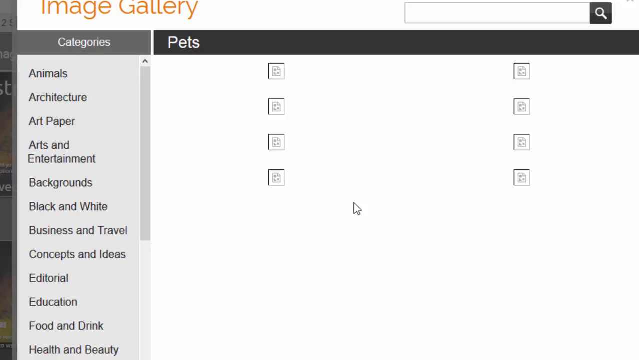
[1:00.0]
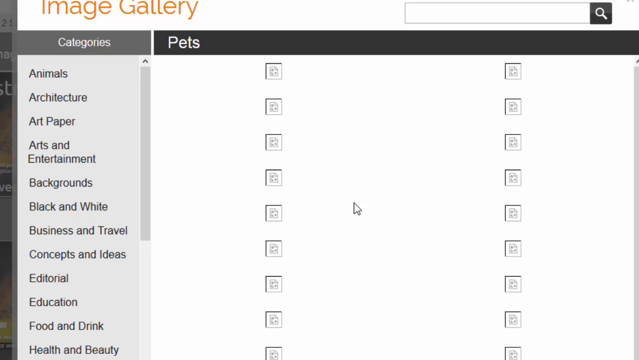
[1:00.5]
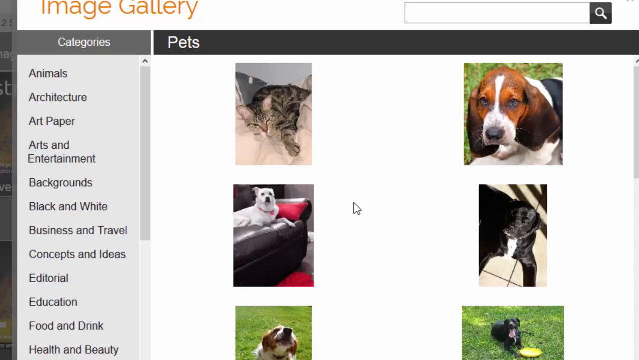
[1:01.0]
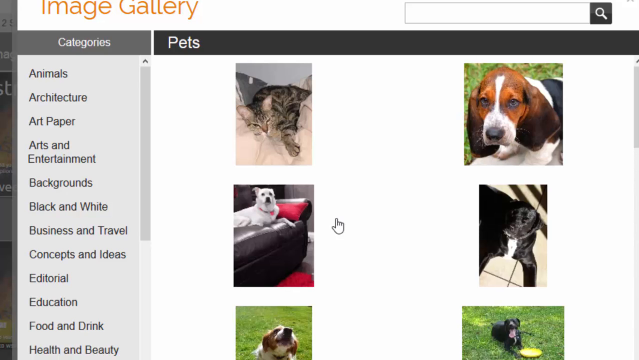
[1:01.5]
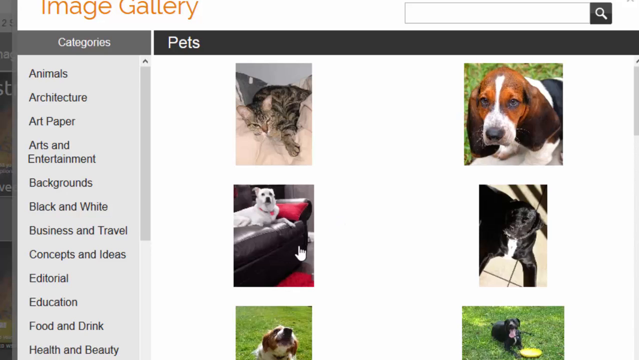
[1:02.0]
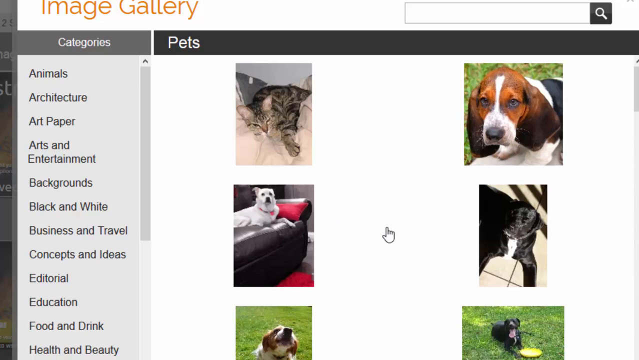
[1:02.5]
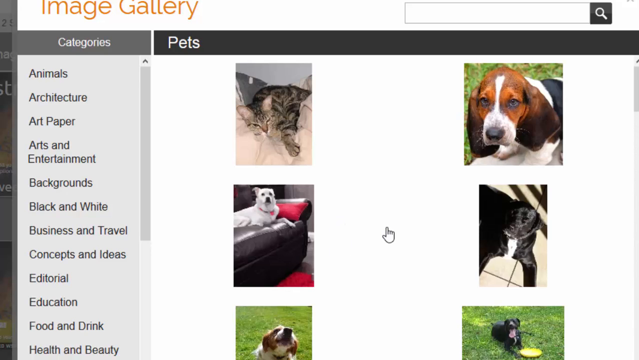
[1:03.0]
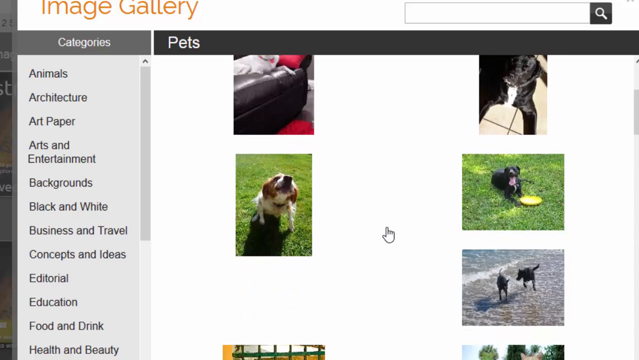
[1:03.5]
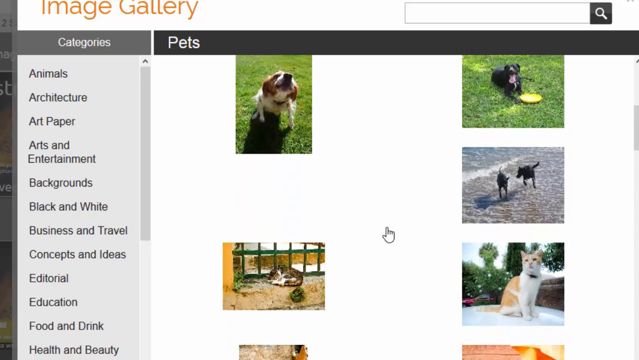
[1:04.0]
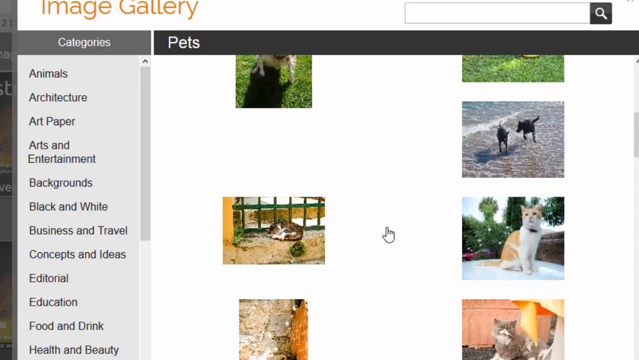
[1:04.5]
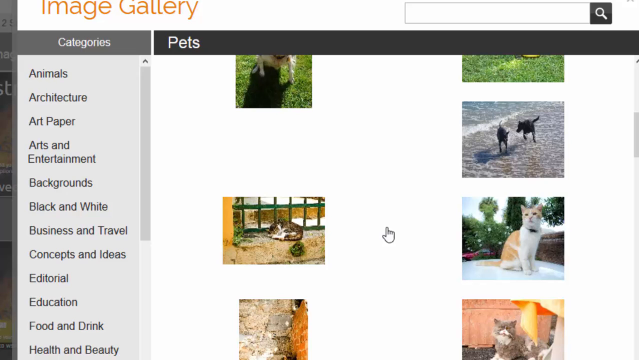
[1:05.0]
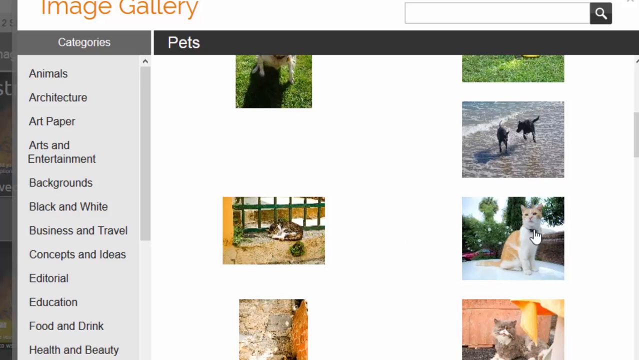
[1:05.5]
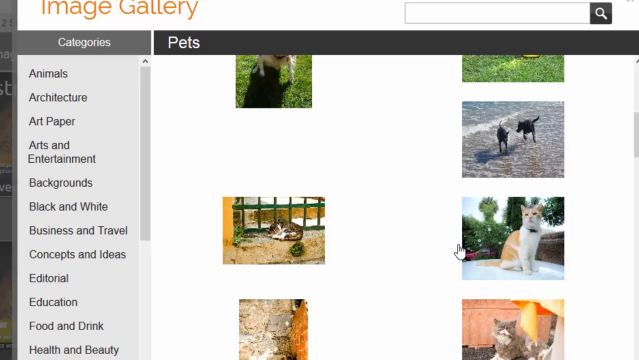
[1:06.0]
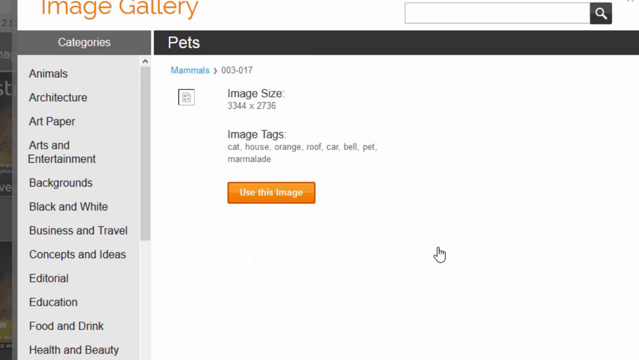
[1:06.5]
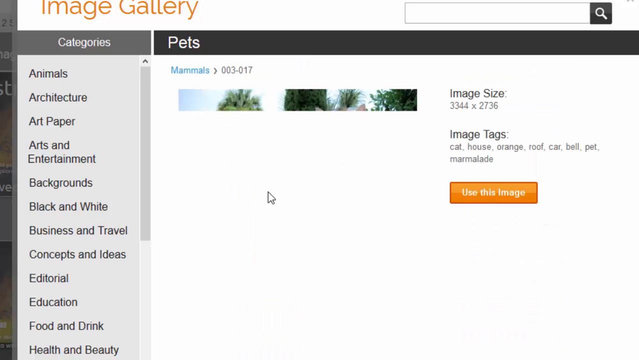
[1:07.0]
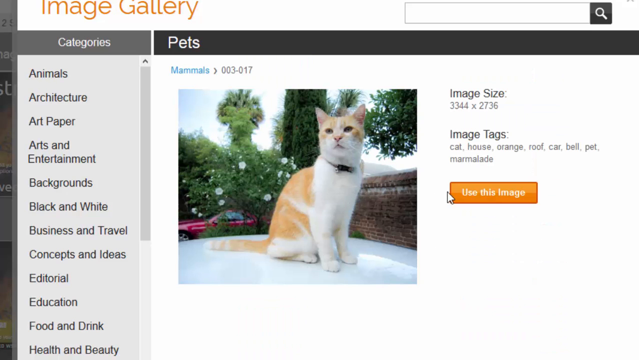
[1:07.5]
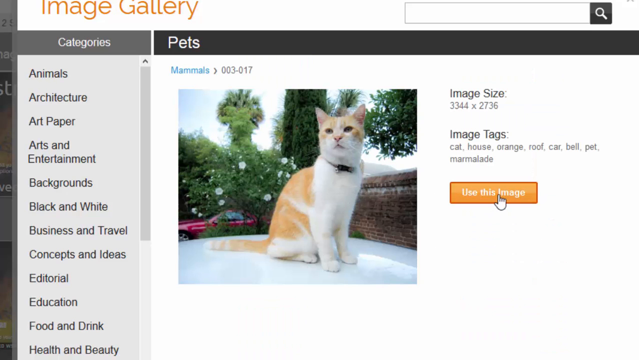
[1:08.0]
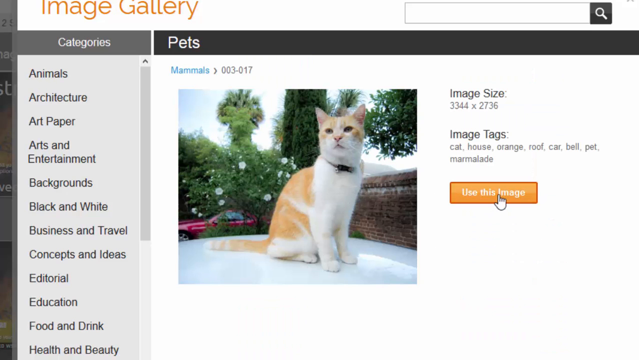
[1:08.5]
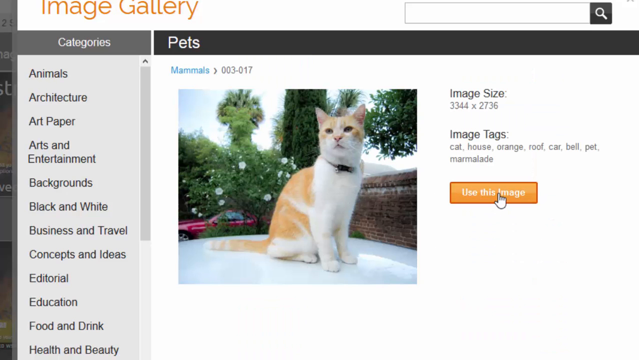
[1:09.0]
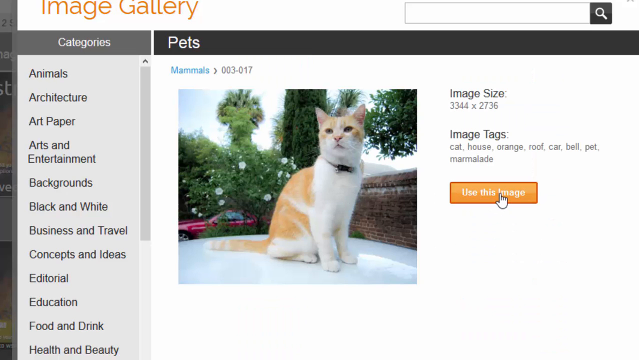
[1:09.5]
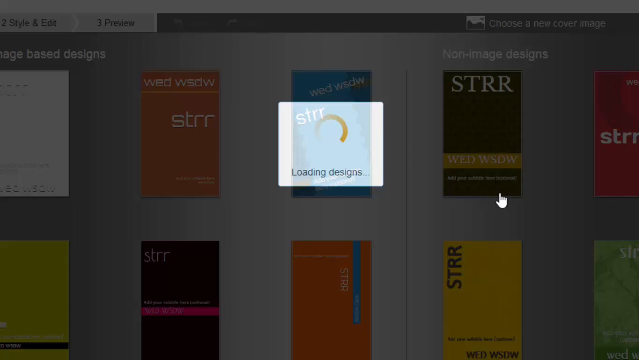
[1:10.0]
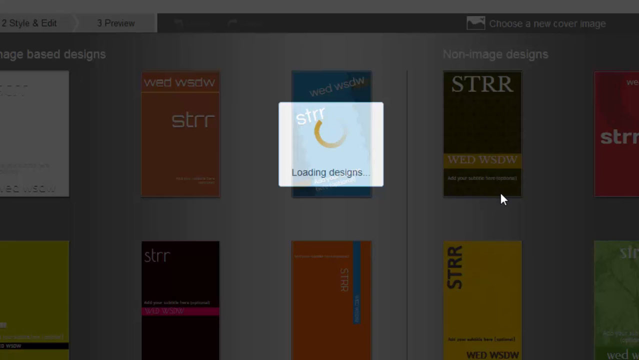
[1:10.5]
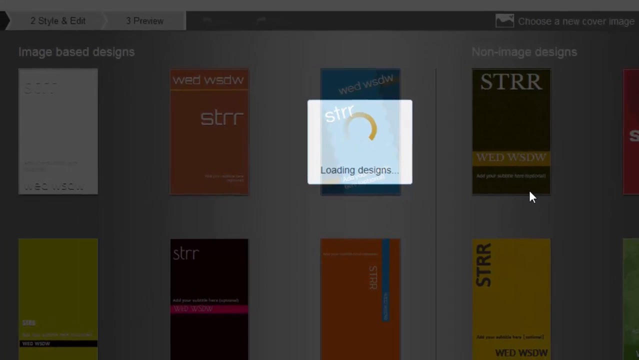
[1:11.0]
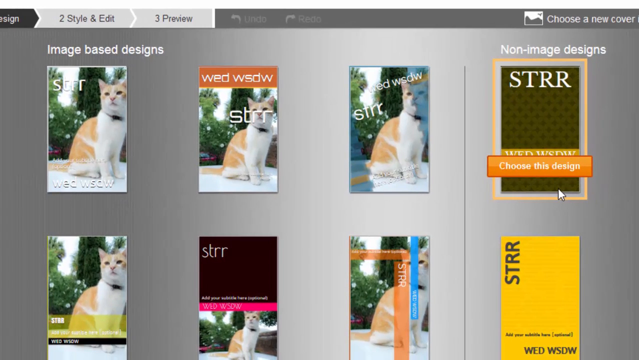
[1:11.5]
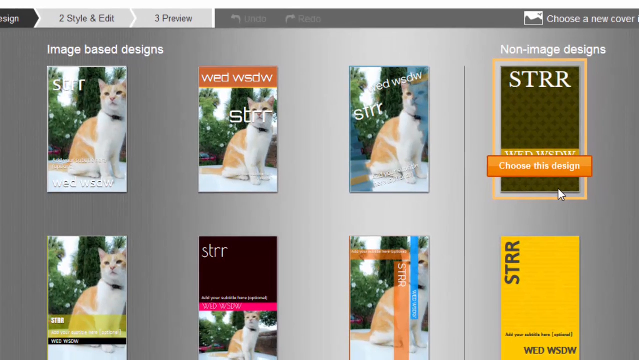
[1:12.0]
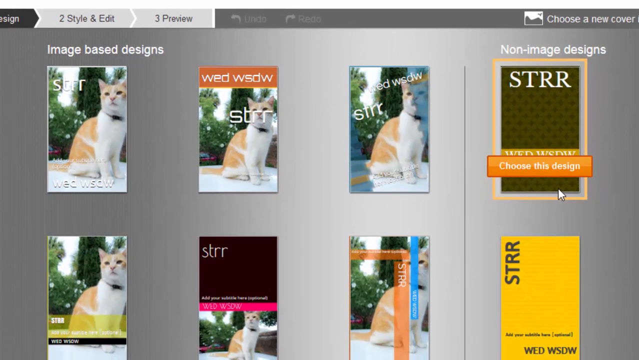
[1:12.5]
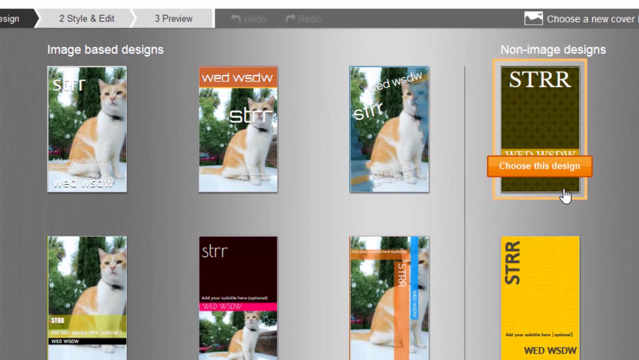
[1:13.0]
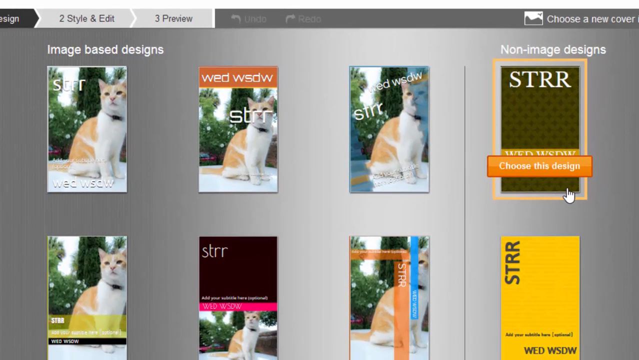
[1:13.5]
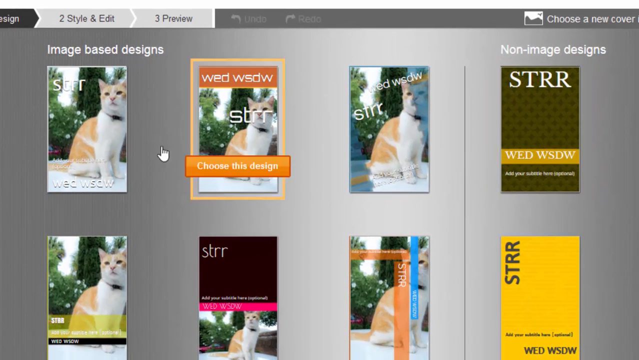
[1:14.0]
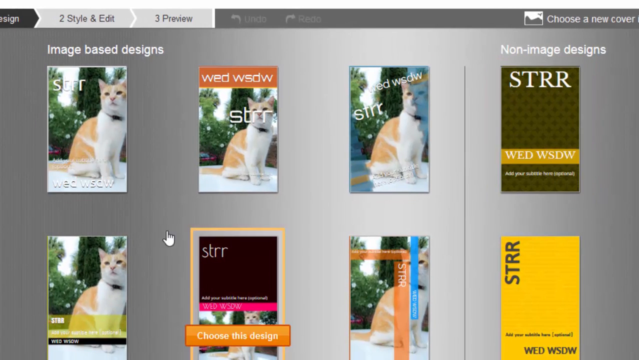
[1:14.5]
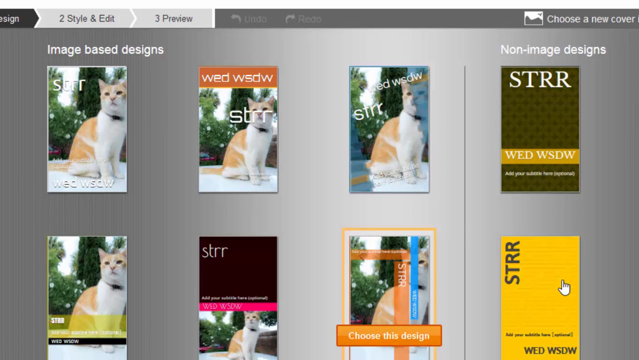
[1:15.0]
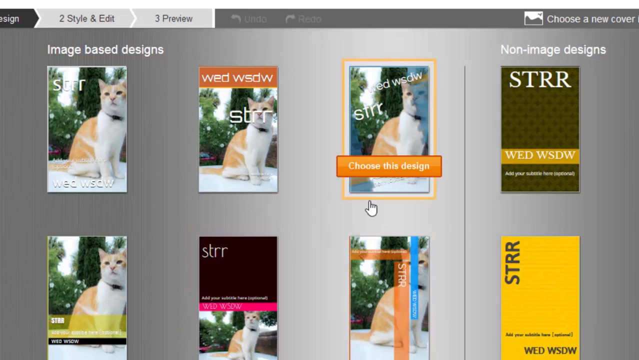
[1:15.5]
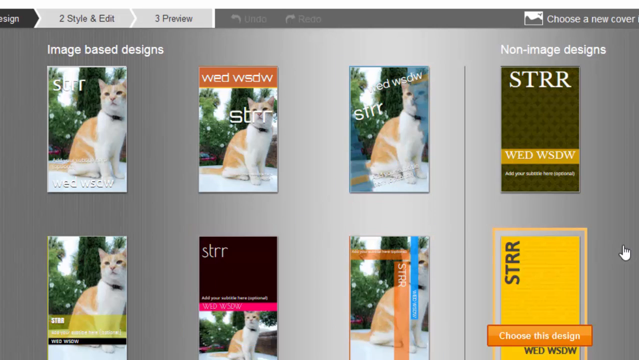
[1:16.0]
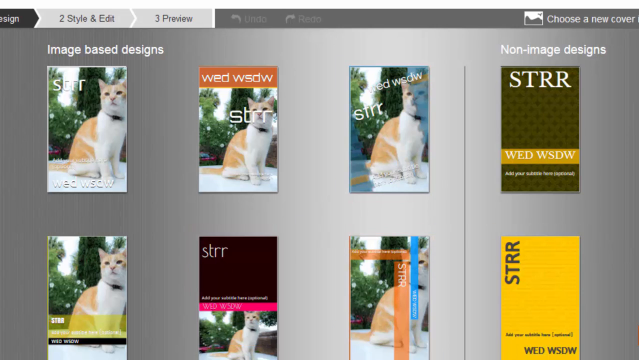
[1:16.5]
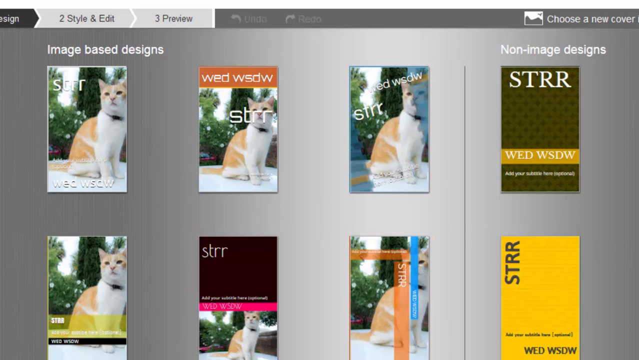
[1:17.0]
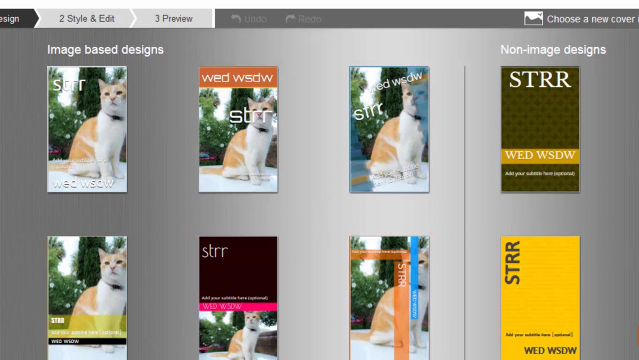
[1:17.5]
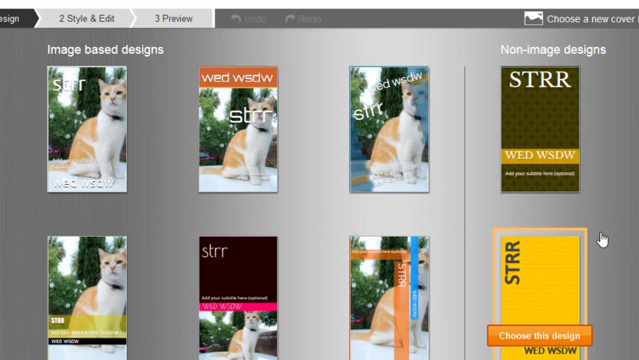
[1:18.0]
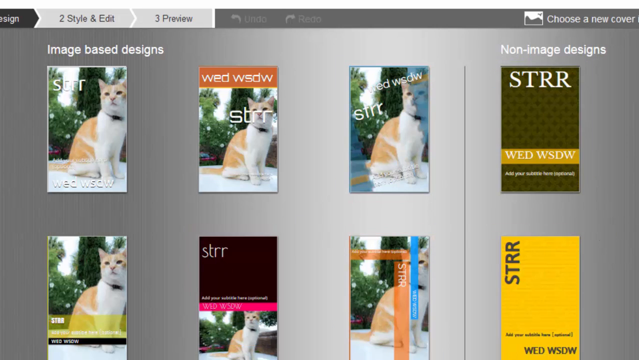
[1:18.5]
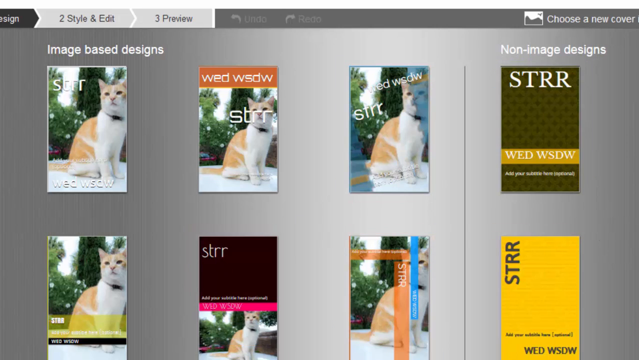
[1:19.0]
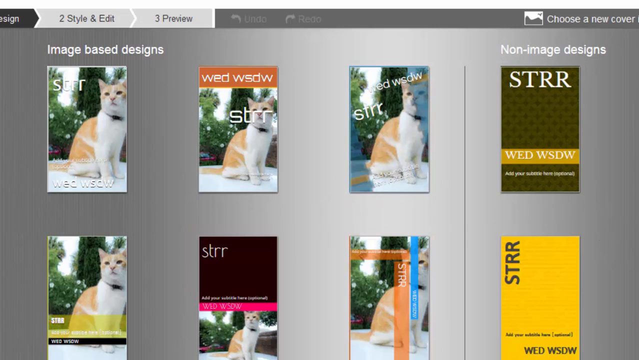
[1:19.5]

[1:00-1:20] The pointer clicks on the pets icon, and a set of photographs in the pets category comes up. At the top left is a cat; below it is a white dog sitting on a couch. At the upper right appears to be a beagle looking at the camera, and below it looks like a black dog looking at the camera. The page scrolls down to show more images of cats and dogs. The cursor clicks on an image of an orange and white cat, and the page expands to show the image's information. At the very top it says "pets", and below that "mammals" with an arrow and the number "003-017". Below that is the image of the orange and white cat, with trees and bushes behind it. The cat appears to be sitting on maybe a white table, looking to the left of the camera, seems to have a collar on, and is kind of staring into the distance. To the right are descriptions of the image: "image size 3344 by 2736" and image tags "cat, house, orange, roof, car, bell, pet, marmalade". Underneath is an orange button reading "use this image", which the pointer looks like it clicks. The screen cuts to another screen with a grayed-out background, with what appear to be maybe some book covers in the back, and a white square in the center with an animated spinner reading "loading designs". After the designs load, the camera pans to the left, showing various book covers with the cat image overlaid, each with different fonts, title colors and borders as different options. The pointer moves around the screen quite a bit, hovering over a couple of designs on the right in a category labeled "non-image designs", which are highlighted as the cursor hovers over them. The six designs on the left are in a category named "image-based designs", and all of them have the cat image on them.